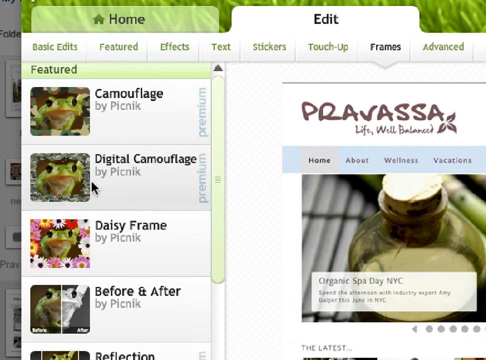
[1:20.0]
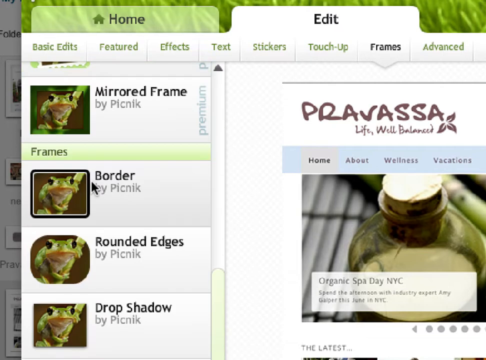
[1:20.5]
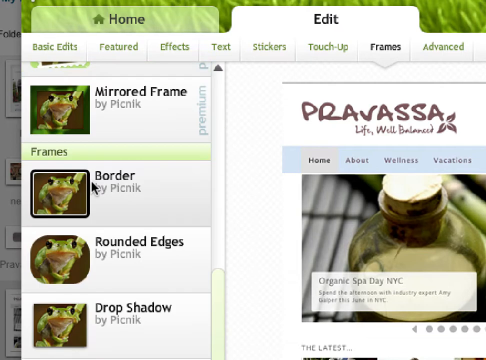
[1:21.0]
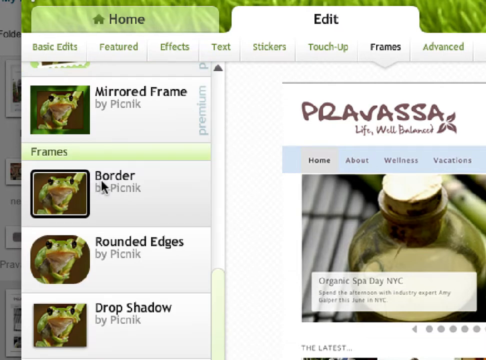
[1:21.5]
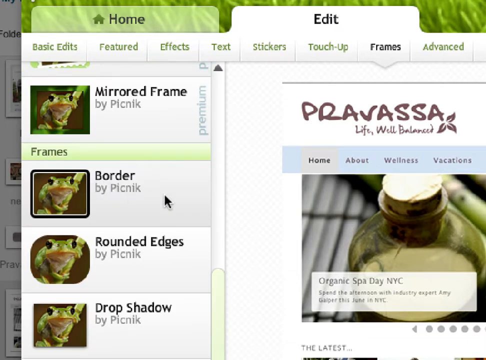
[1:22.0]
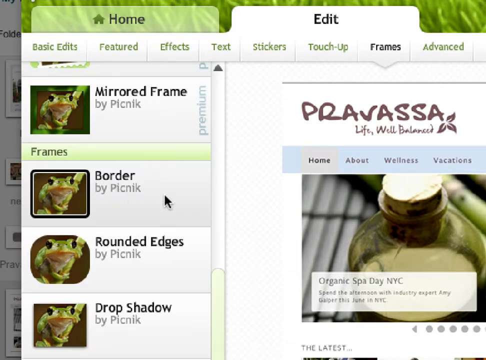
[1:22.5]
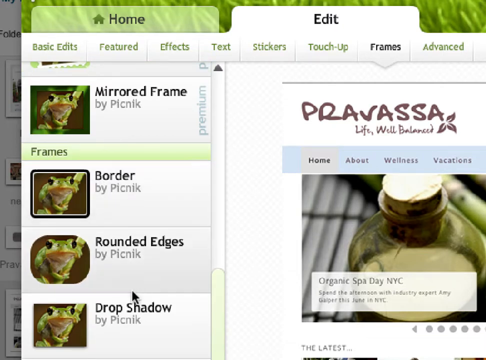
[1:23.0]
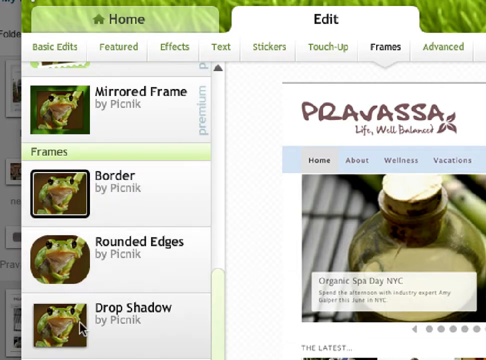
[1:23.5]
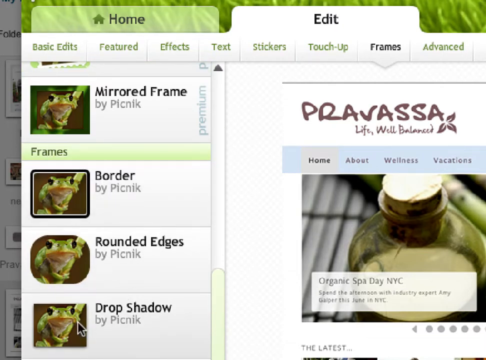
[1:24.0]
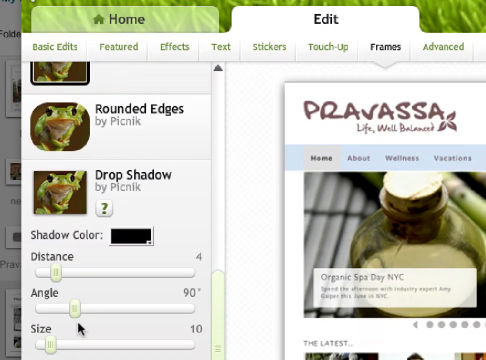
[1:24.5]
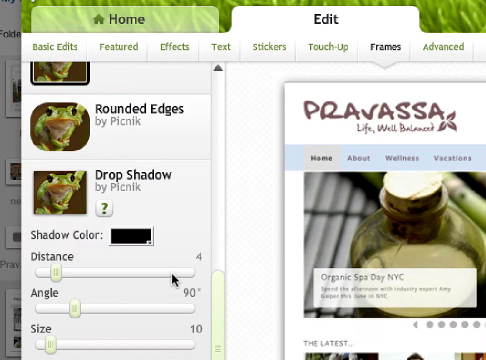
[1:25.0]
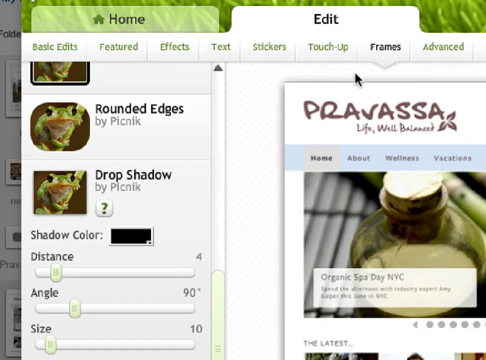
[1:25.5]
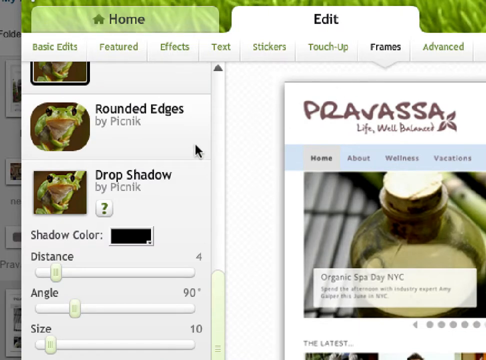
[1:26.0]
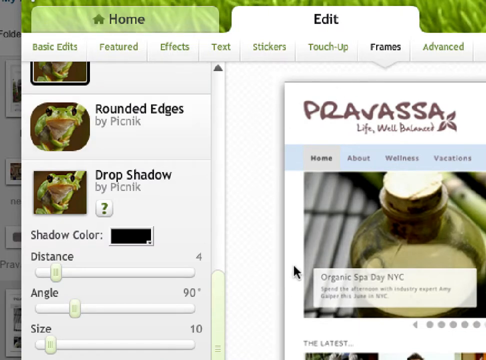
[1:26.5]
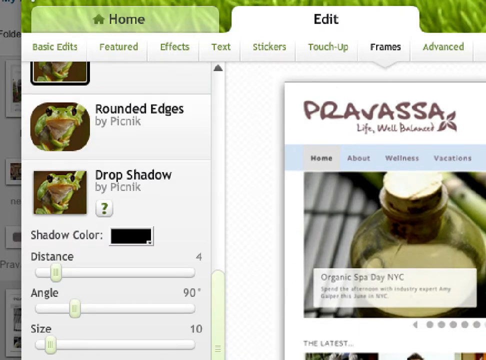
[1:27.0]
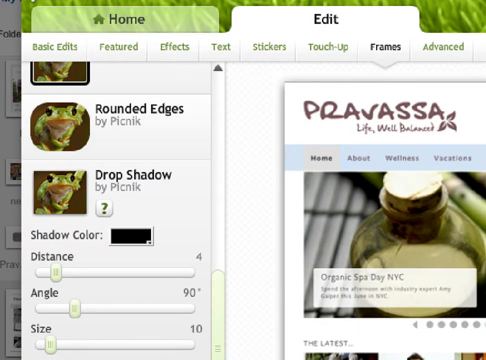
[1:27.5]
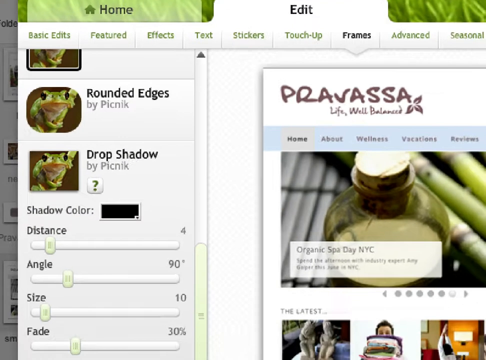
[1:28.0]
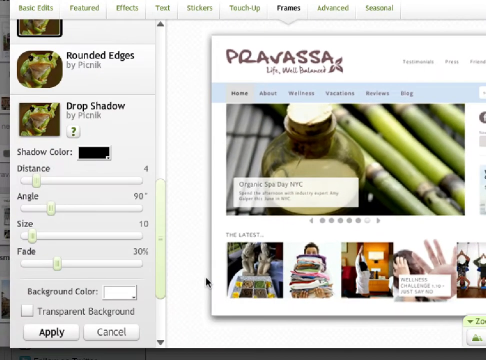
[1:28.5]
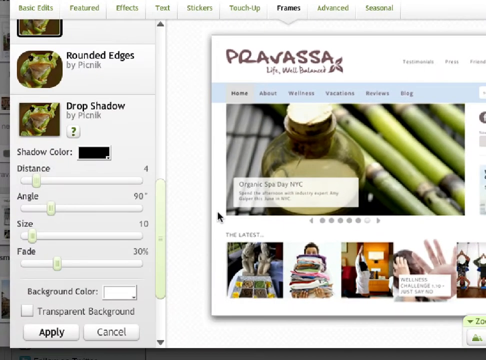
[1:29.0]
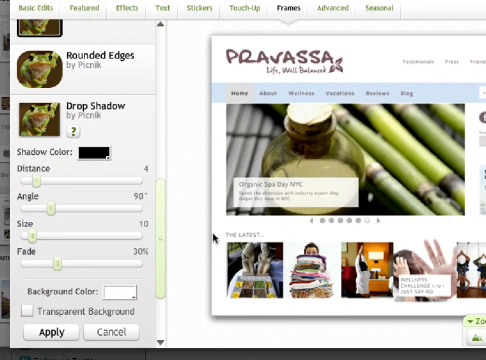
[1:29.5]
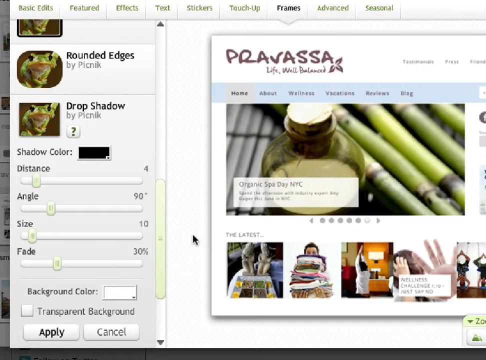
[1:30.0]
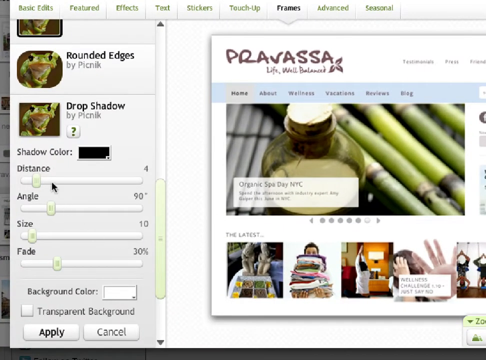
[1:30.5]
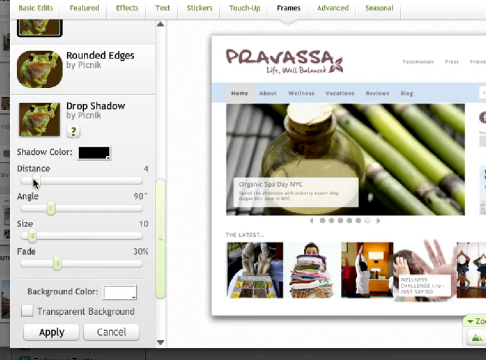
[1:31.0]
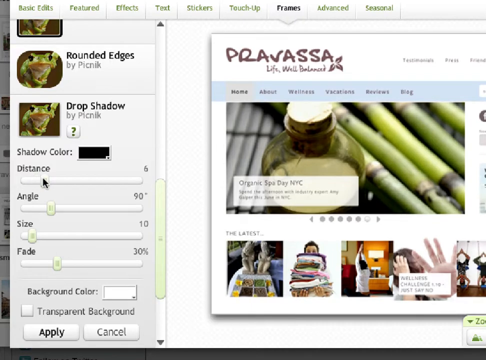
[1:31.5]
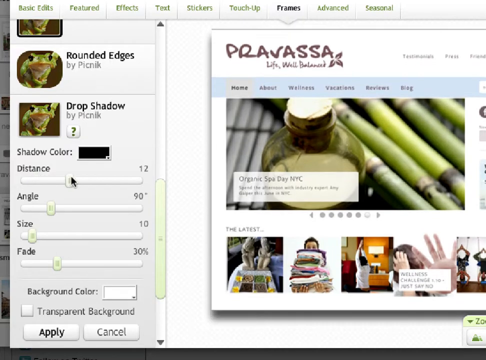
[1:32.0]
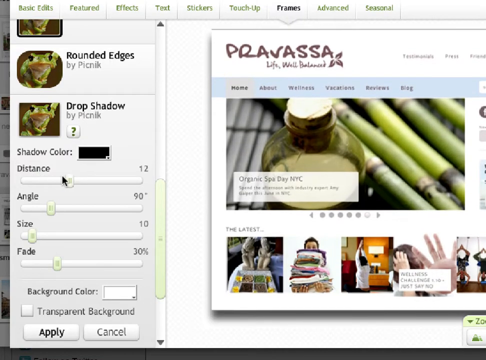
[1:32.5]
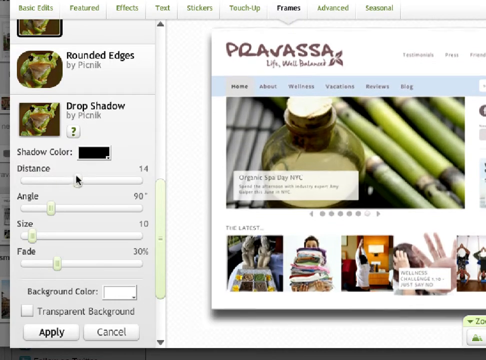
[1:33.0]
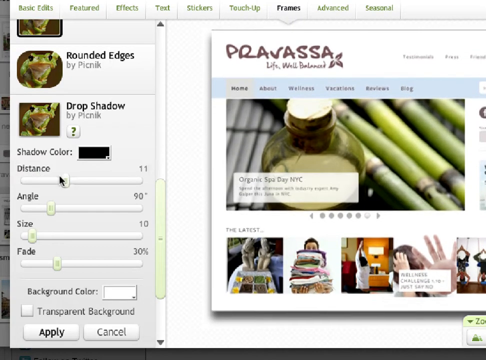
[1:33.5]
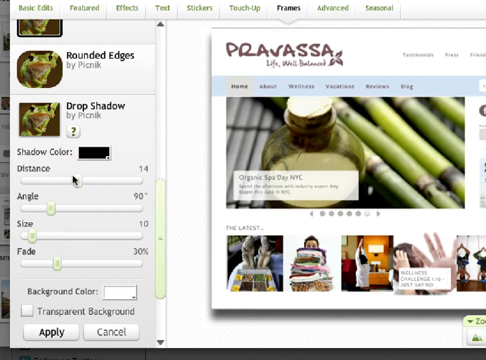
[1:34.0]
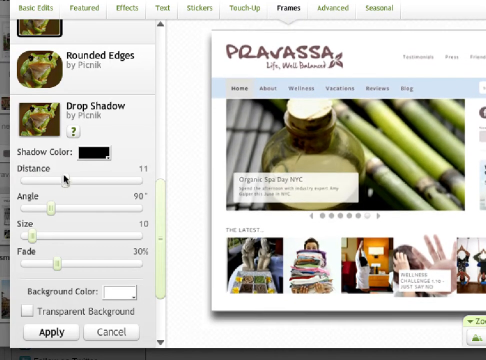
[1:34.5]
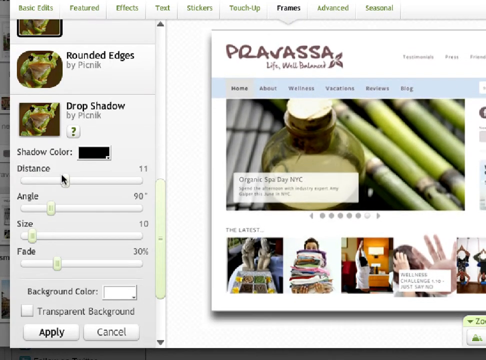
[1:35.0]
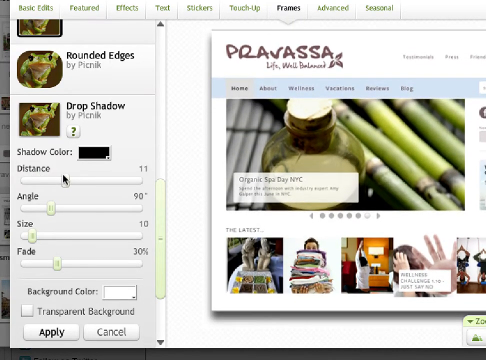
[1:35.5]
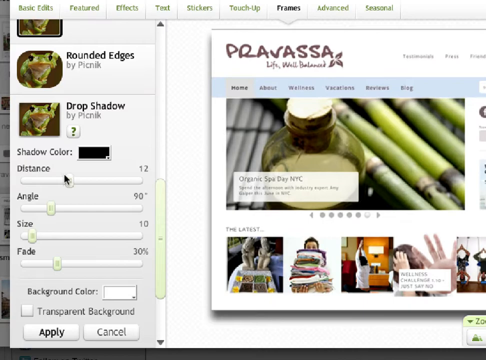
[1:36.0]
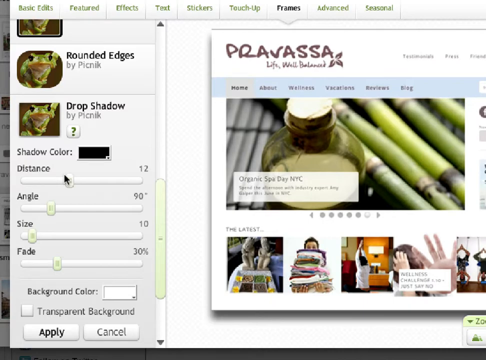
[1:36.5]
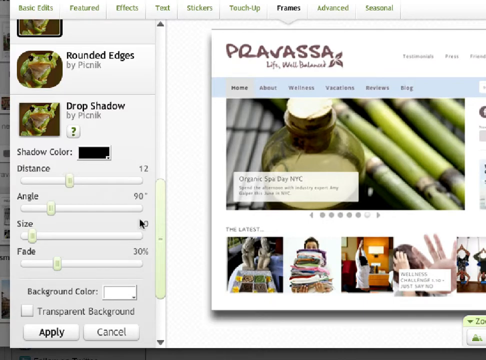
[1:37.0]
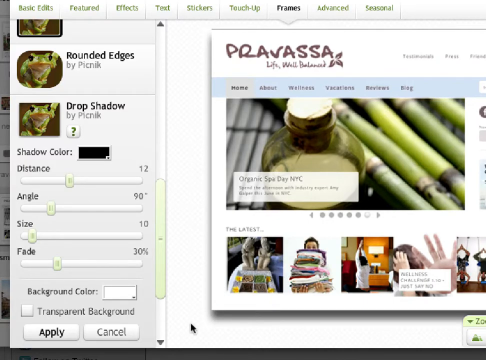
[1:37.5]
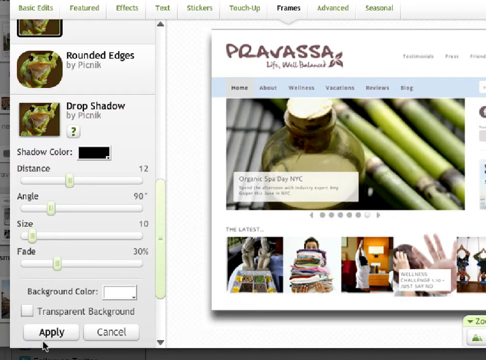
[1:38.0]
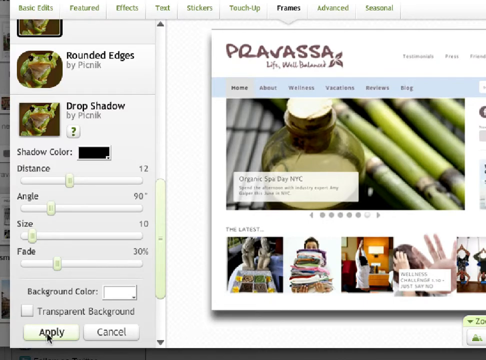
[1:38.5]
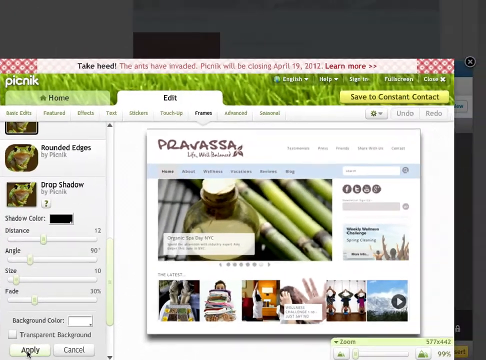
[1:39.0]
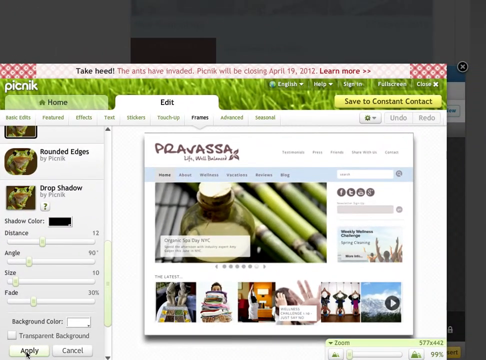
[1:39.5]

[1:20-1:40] The computer screen is primarily on the right side of the larger screen, with about an eighth of an inch visible on the left between the main screen and the screen behind it, where other pictures with white frames around them can be seen. The main screen has the word "edit", and under it are "basic edits", "featured", "effects", "text", "stickers", "touch up", "frames" and "advanced". The word "frames" is highlighted in black, apparently as the current page. On the left side, about a fourth of the way to the middle of the screen, is a column with "digital camouflage by picnic". Both items have a picture on the left of what looks like a green frog with large eyes and a large semicircular mouth, facing directly forward, with a normal outdoor area around the top of it. In the middle, a grainy area around the frog forms a frame. Next is a "daisy frame by picnic" with daisies all around it, shown before and after: the before picture of the frog looks natural, and the after picture, on the right side of the small square, is black and white.